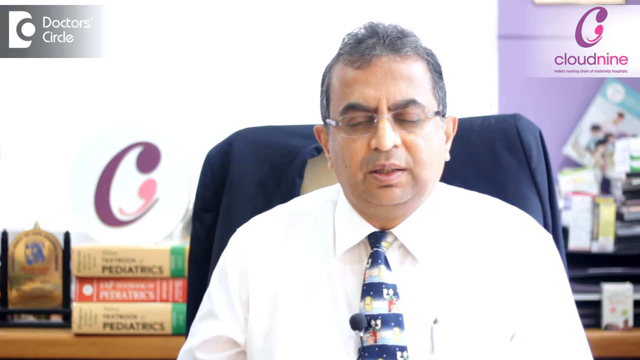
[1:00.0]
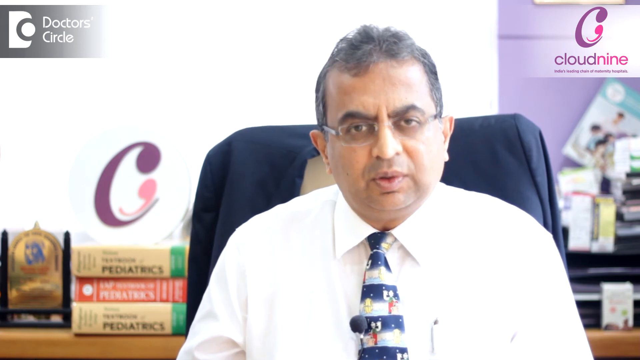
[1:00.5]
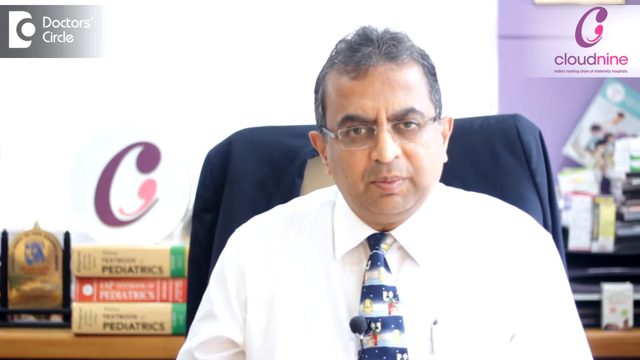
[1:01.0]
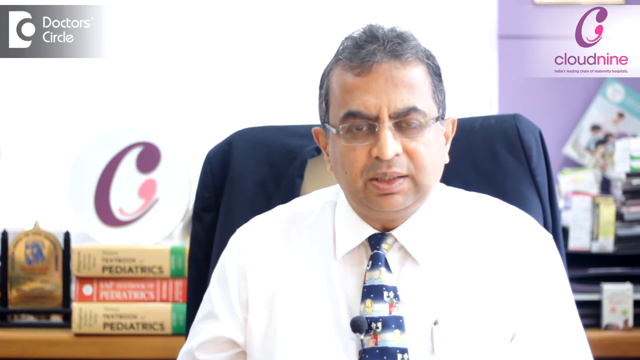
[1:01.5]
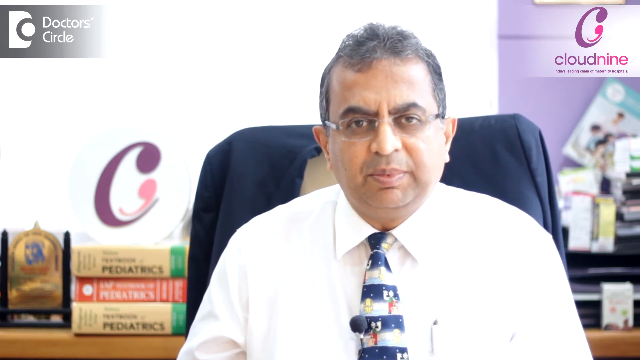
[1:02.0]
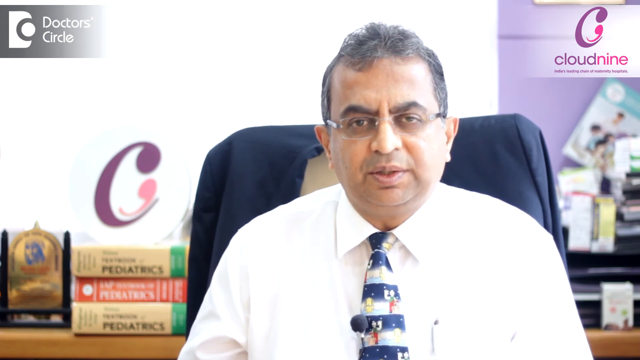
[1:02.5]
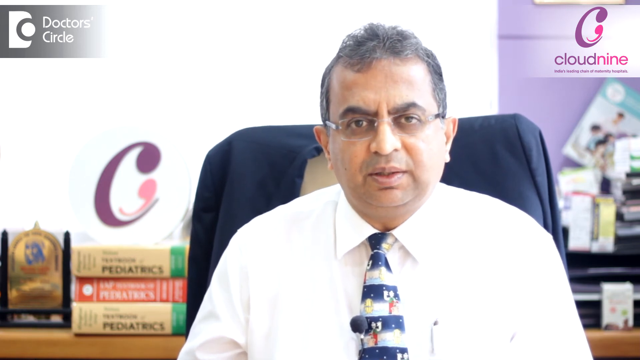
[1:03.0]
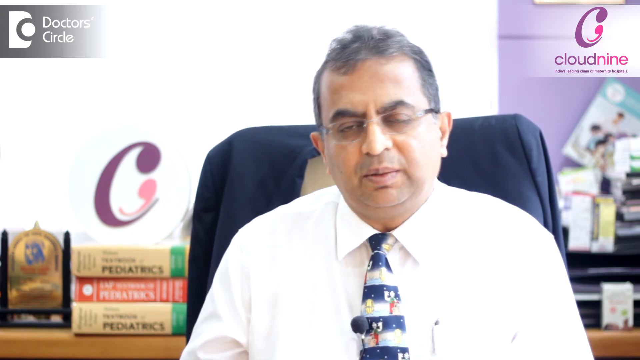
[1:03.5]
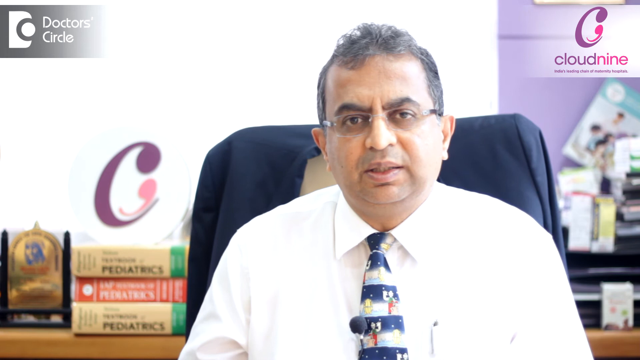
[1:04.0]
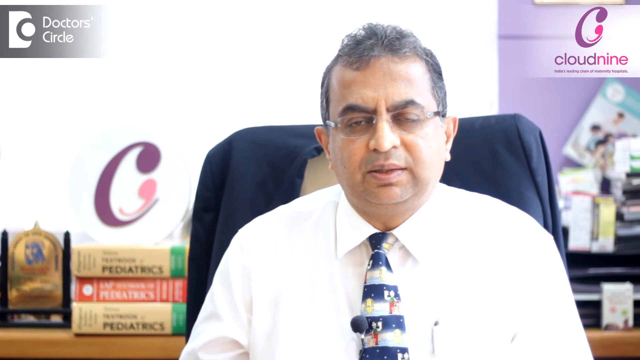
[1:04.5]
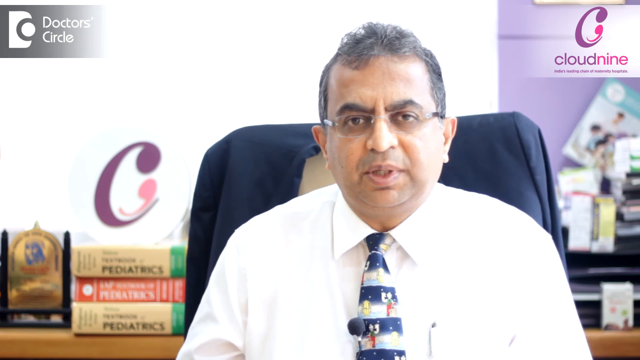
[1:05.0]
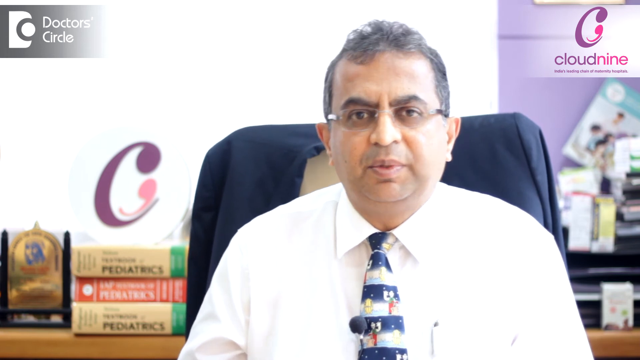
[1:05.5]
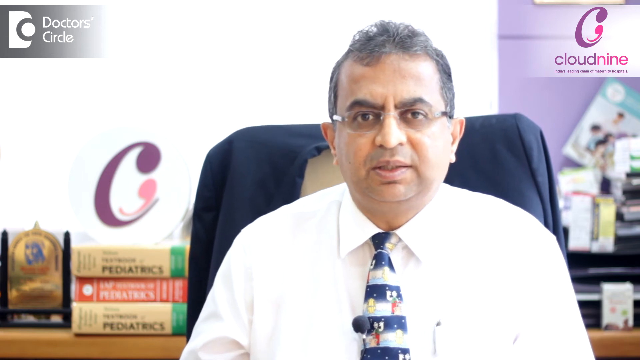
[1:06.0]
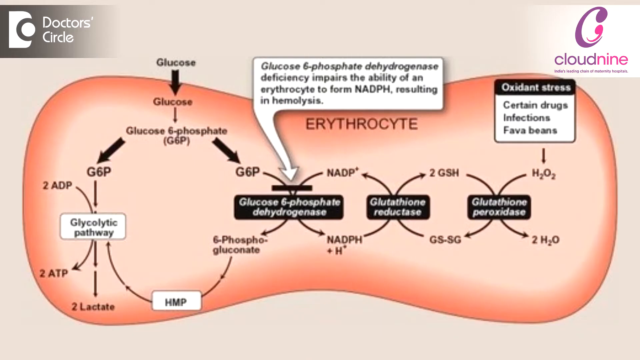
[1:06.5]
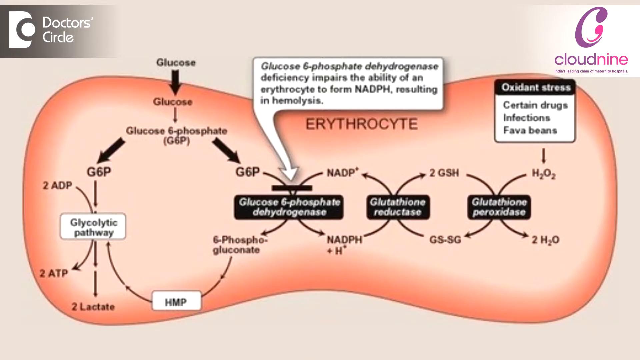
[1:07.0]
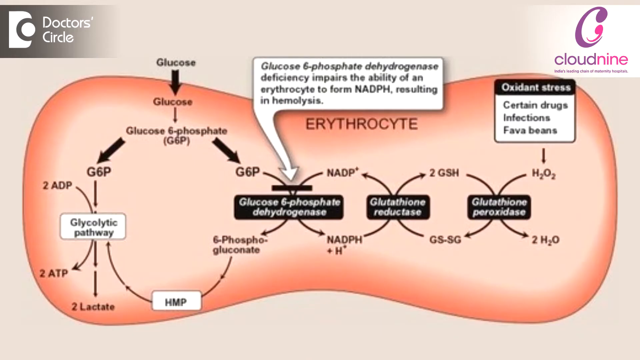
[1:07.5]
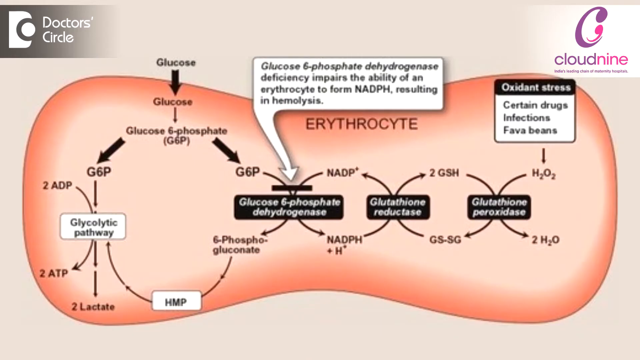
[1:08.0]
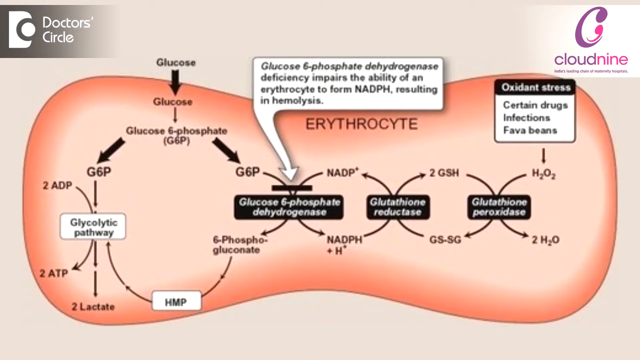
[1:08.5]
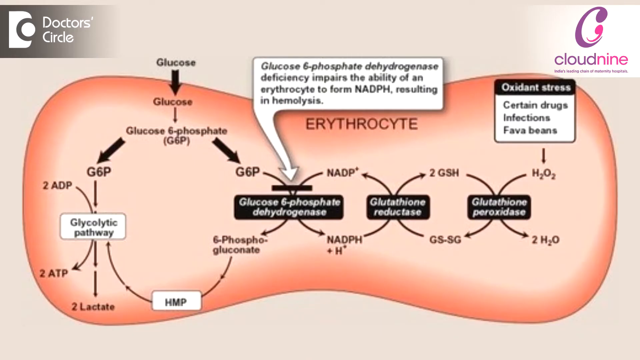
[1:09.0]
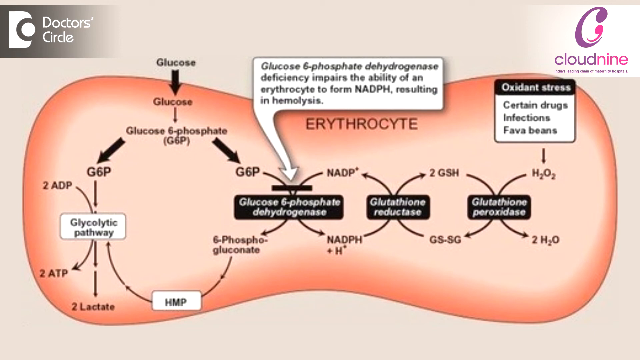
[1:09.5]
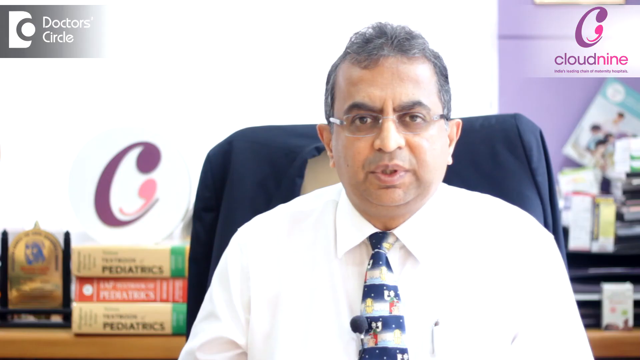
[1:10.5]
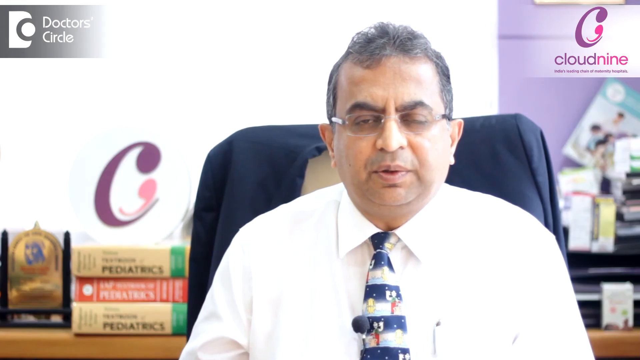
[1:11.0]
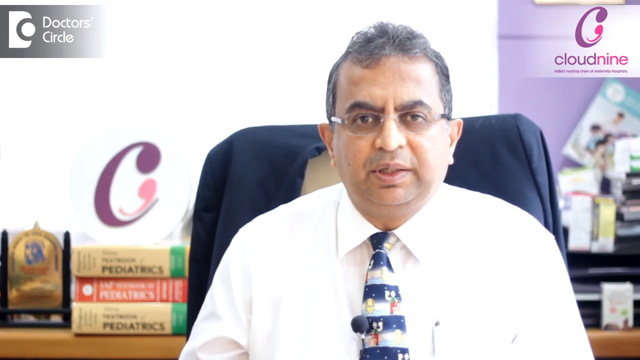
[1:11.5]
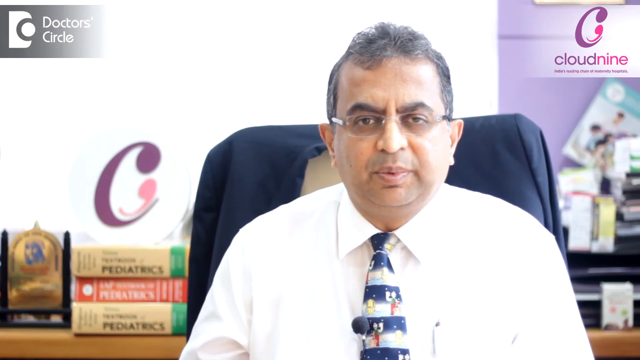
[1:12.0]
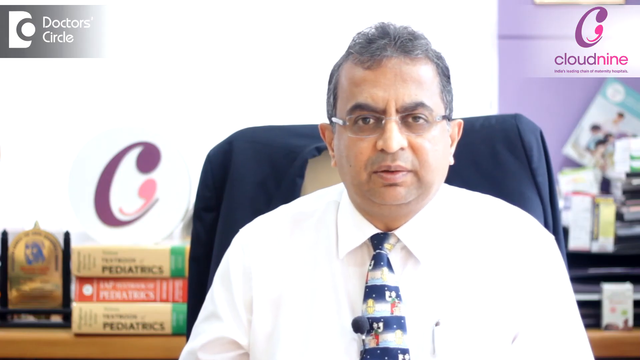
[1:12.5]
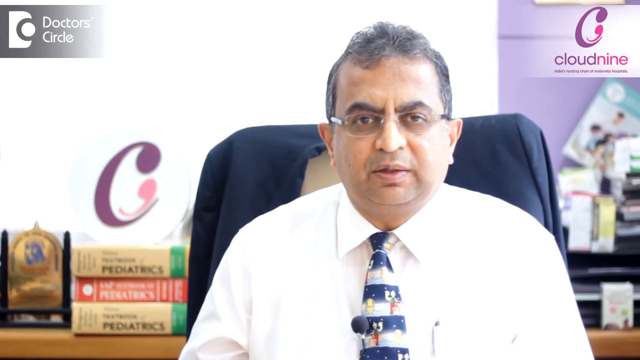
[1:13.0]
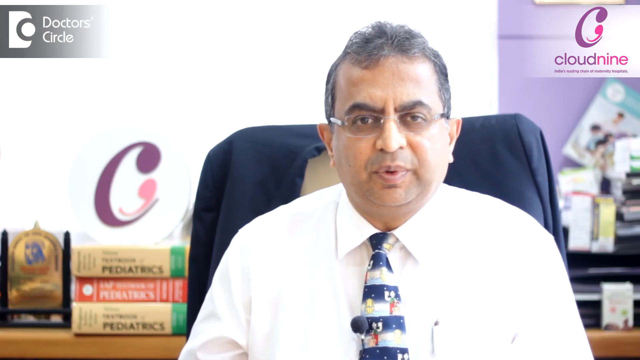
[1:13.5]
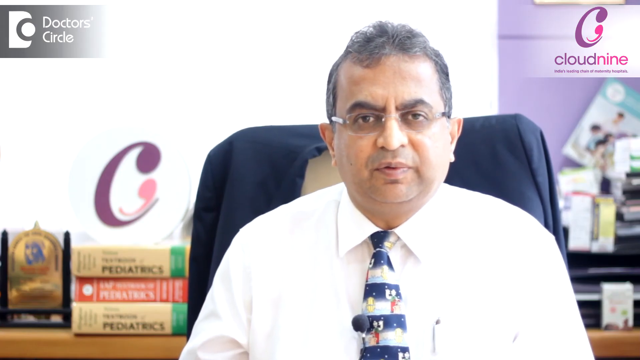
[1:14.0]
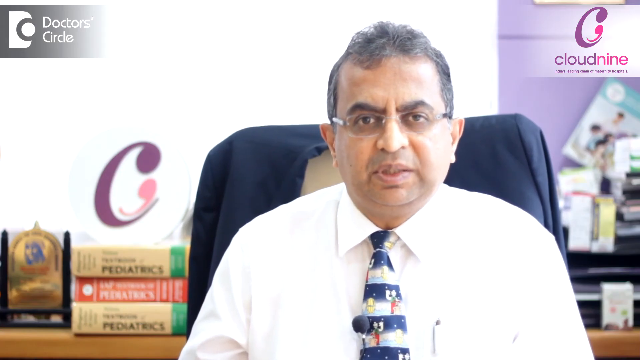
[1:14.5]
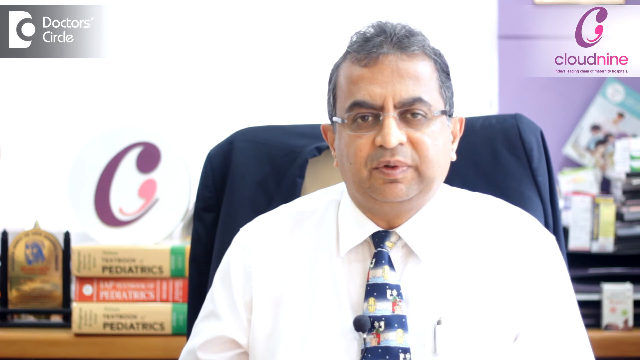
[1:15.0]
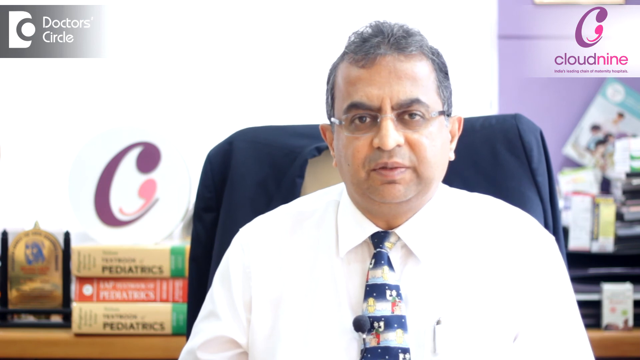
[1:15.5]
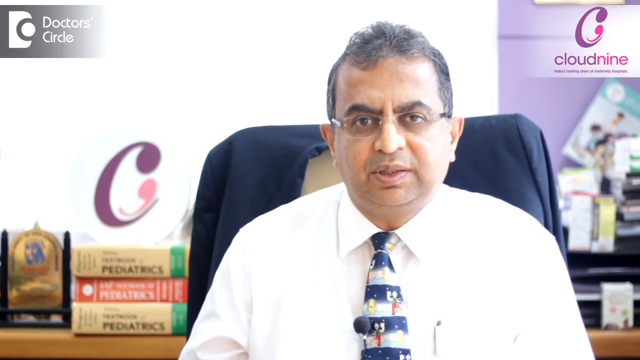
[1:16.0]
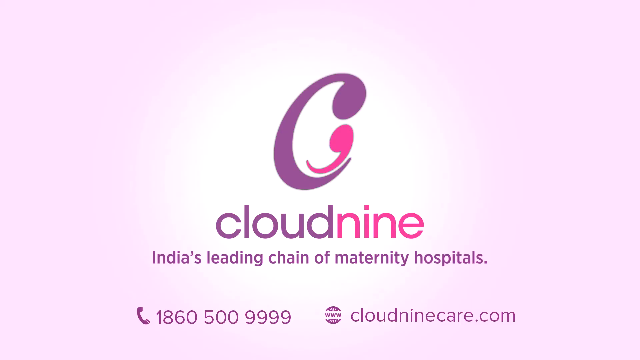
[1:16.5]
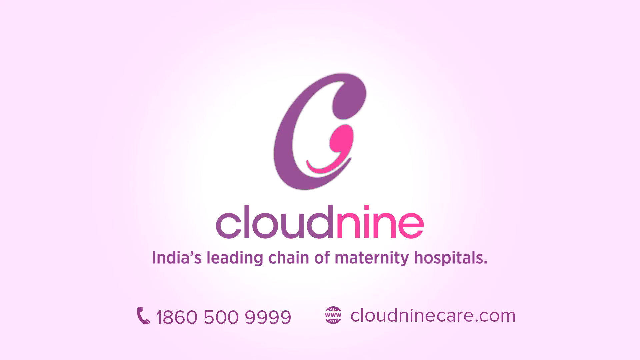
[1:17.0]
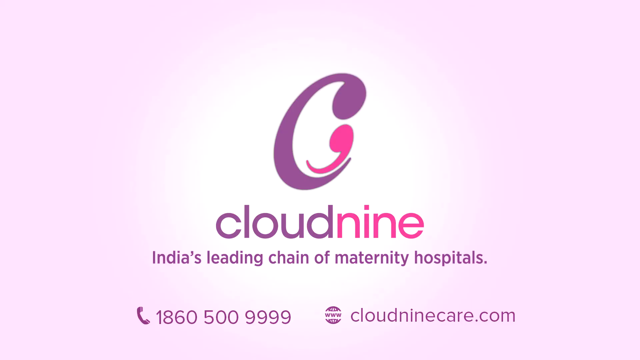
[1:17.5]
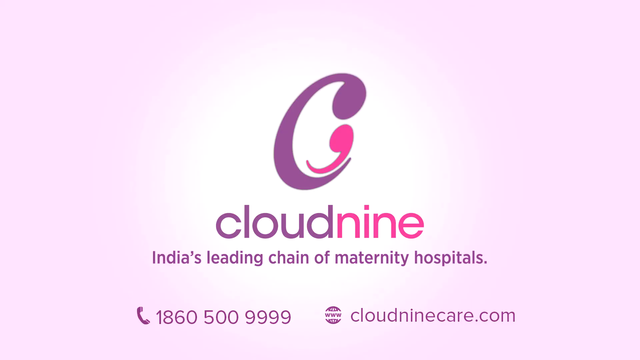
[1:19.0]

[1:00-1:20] On the right is what looks like a gentleman of possibly Indian heritage, seated in a chair with his jacket draped over the back. In the background are some books and some other clutter. At the top left is a gray and white logo reading "Doctor's Circle," and on the right a pink and purple logo reading "Cloud Nine." The gentleman, who has glasses, continues speaking while looking into the camera, with a very kind, compassionate look on his face. A medical illustrative graphic comes up, kind of centered on screen. A white pop-up over a peach-looking graphic reads in black: "glucose-6-phosphate dehydrogenase deficiency. It impairs the ability of an erythrocyte to form NADPH resulting in hemolysis." On the right another pop-up reads "oxidate stress, certain drug interactions and fava beans." The graphic appears to concern glucose production, with a whole bunch of black arrows apparently showing how various medical factors related to glucose production are interconnected. It then cuts back to the gentleman, who keeps talking while looking at the camera. Then a purple and pink background appears with a purple C with a little pink beside it, and text in a mixture of purple and pink reads "Cloud9 India's leading chain of maternity hospitals." A phone number with a little phone icon is at the bottom, and a website with a little globe icon is below.